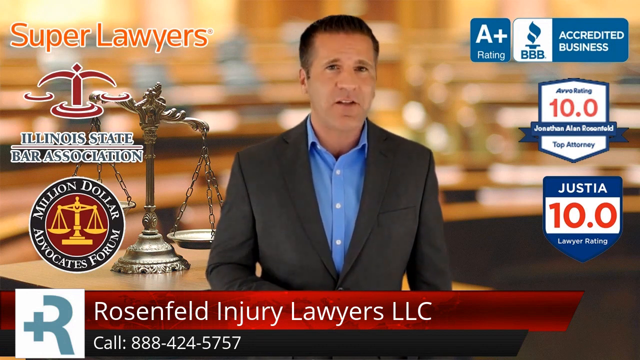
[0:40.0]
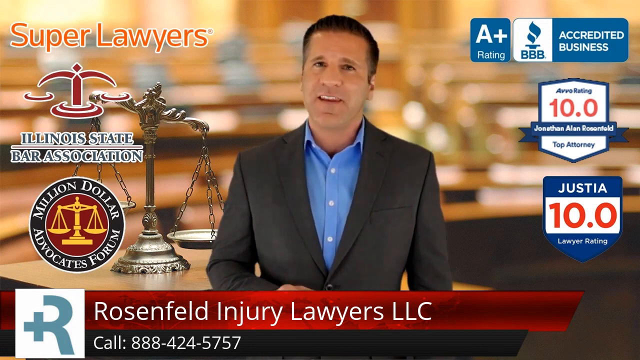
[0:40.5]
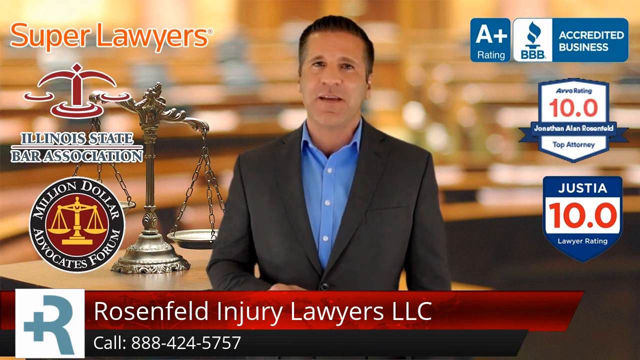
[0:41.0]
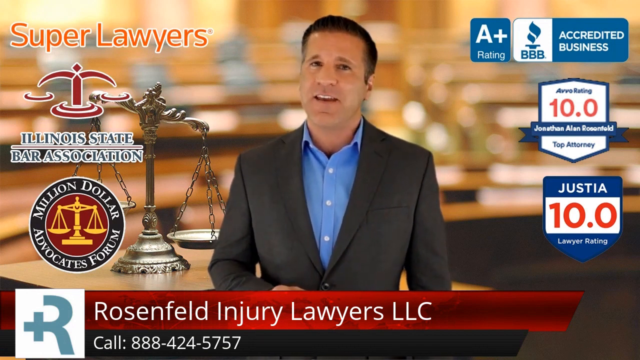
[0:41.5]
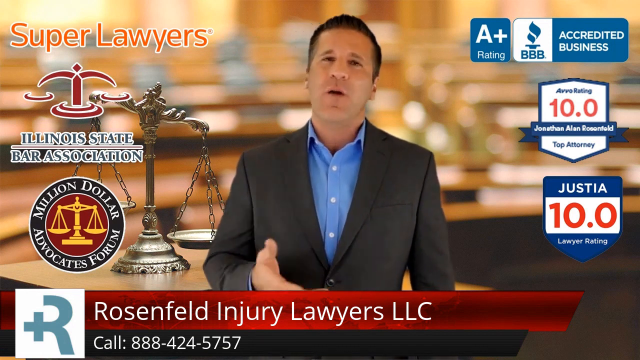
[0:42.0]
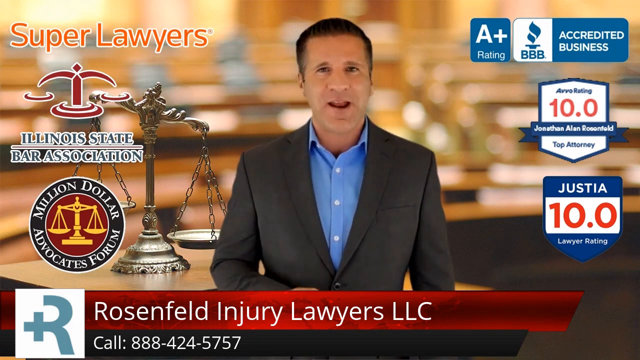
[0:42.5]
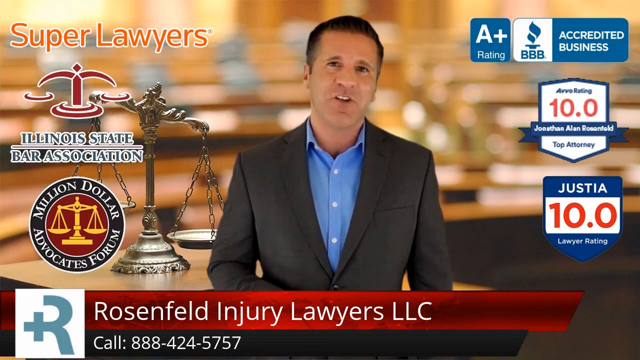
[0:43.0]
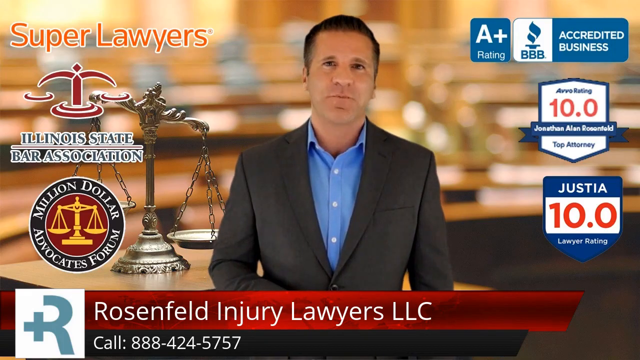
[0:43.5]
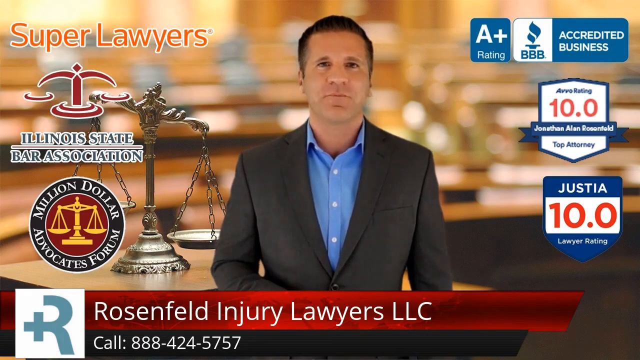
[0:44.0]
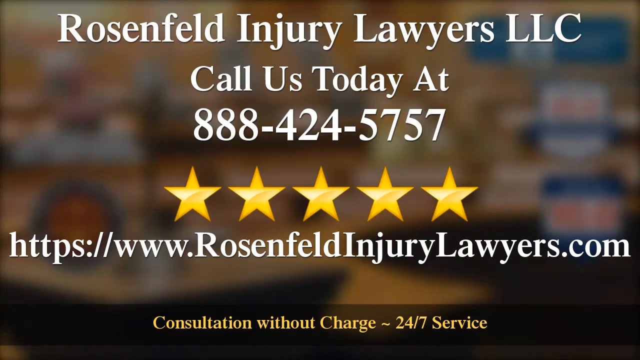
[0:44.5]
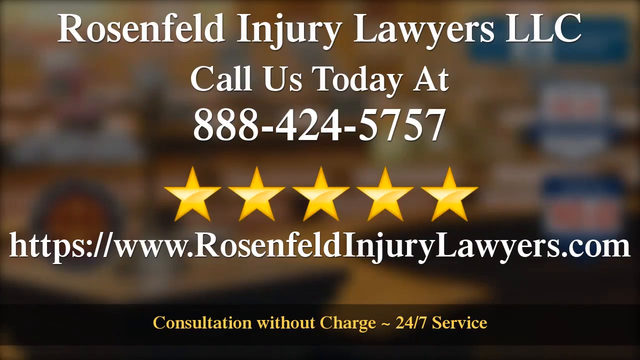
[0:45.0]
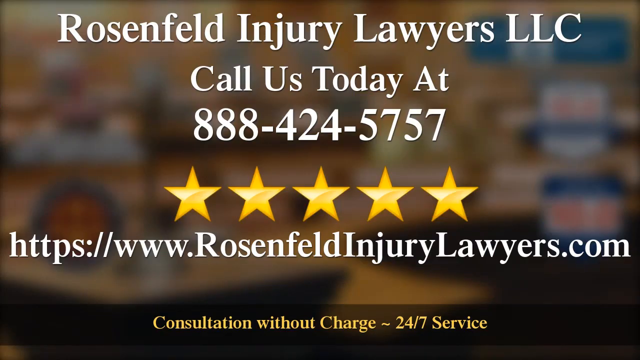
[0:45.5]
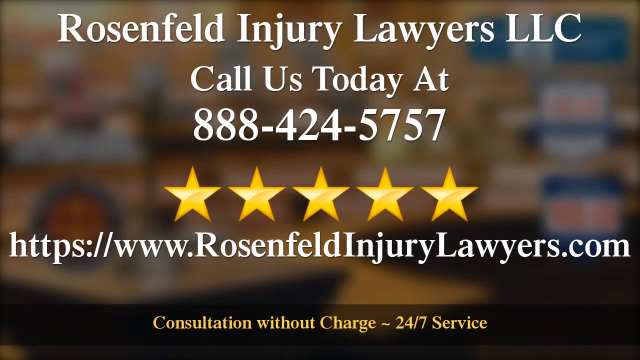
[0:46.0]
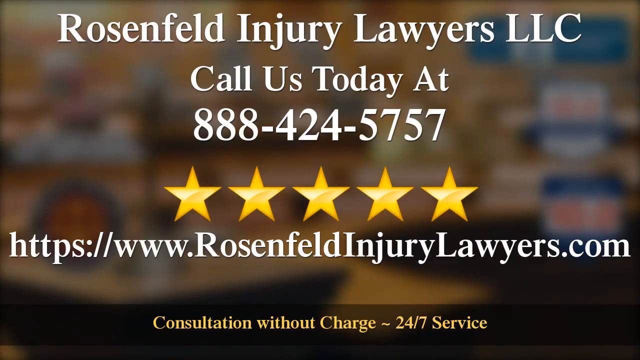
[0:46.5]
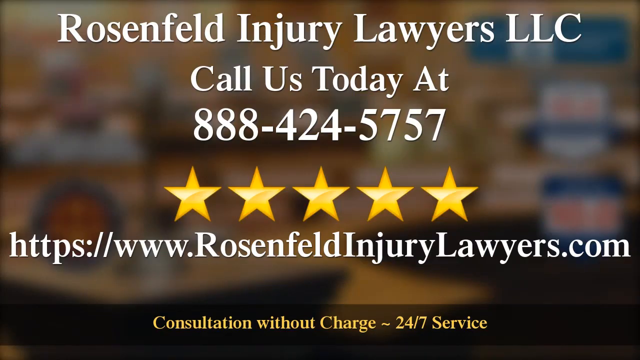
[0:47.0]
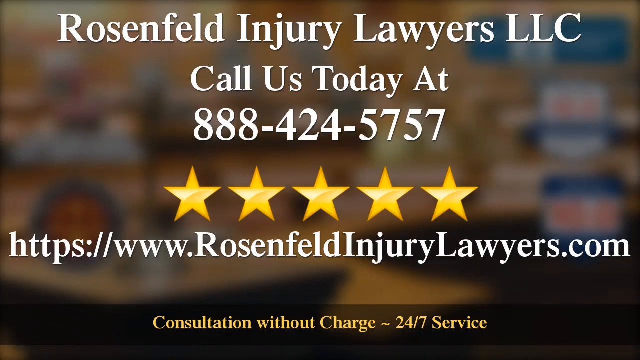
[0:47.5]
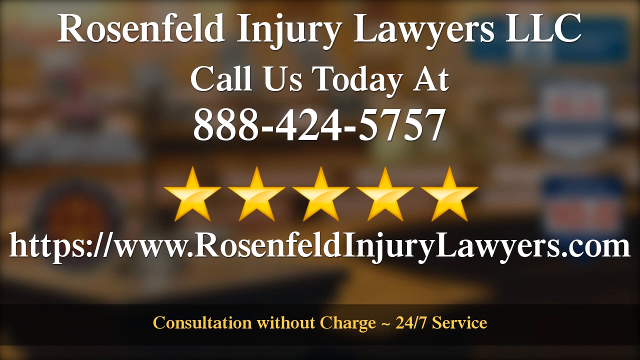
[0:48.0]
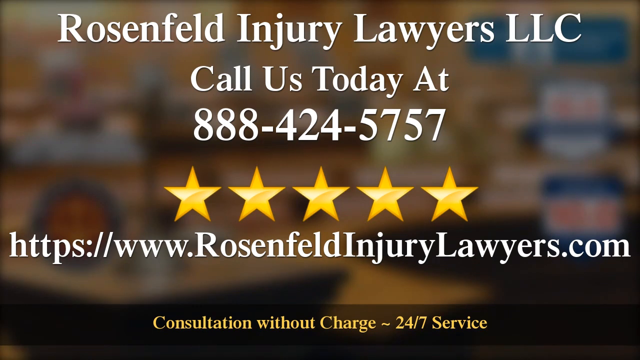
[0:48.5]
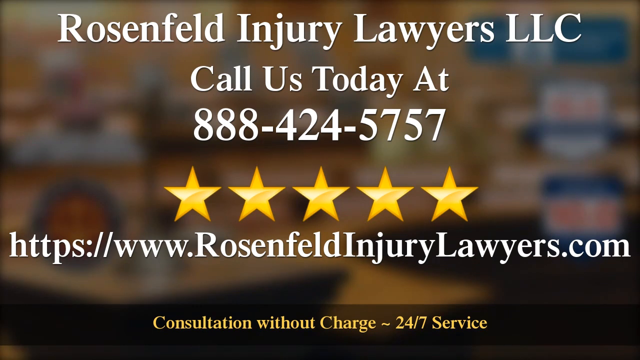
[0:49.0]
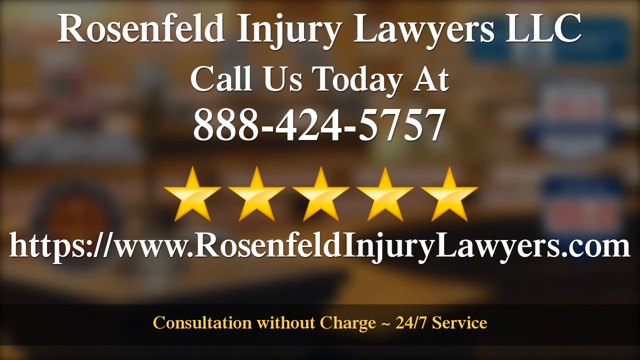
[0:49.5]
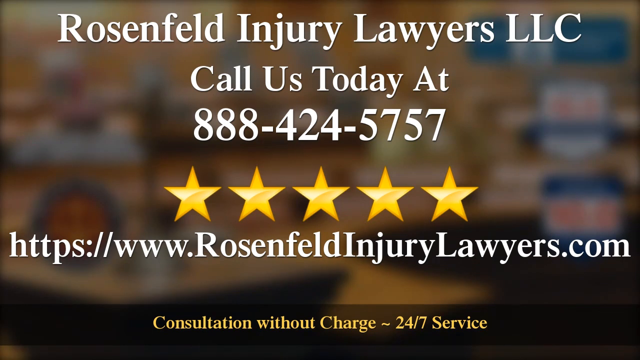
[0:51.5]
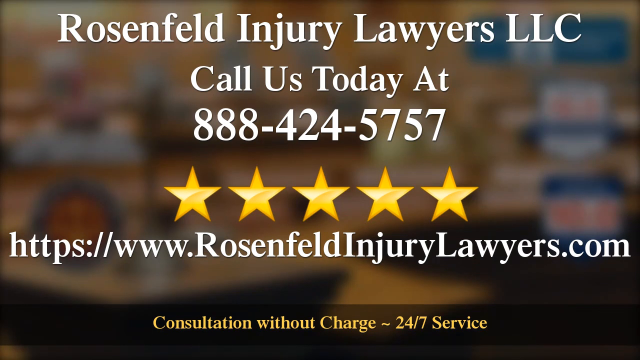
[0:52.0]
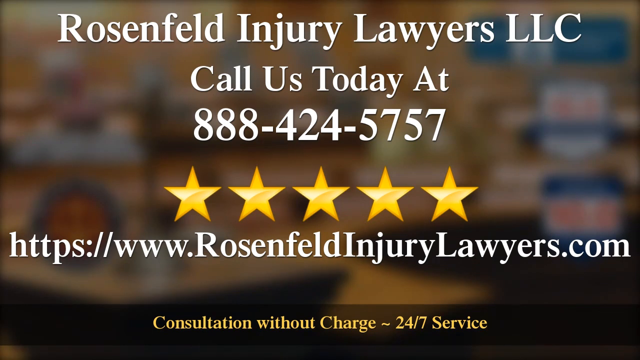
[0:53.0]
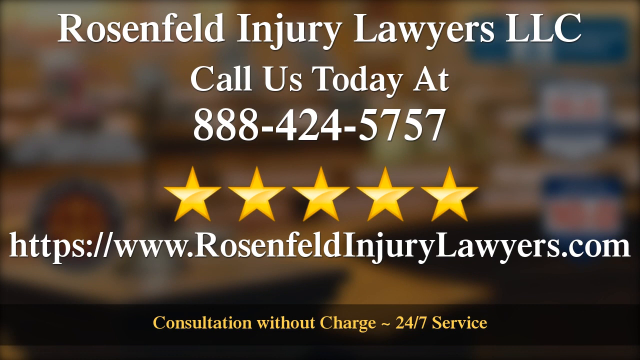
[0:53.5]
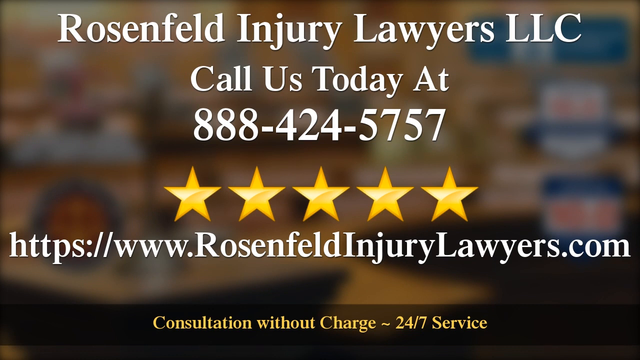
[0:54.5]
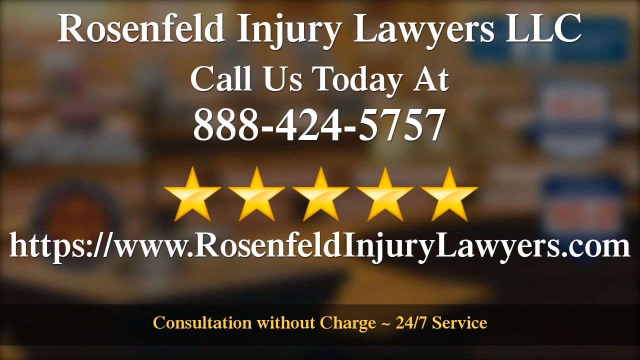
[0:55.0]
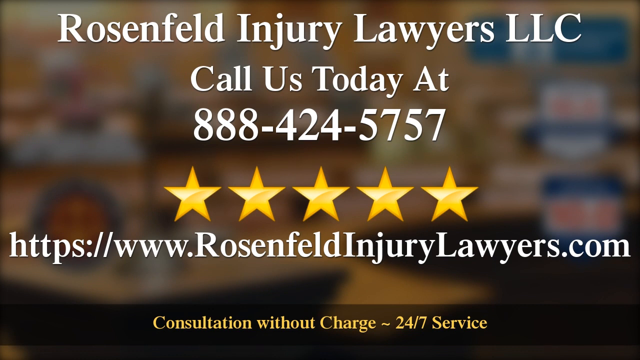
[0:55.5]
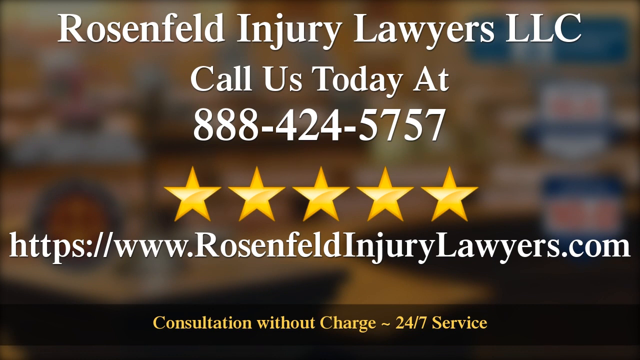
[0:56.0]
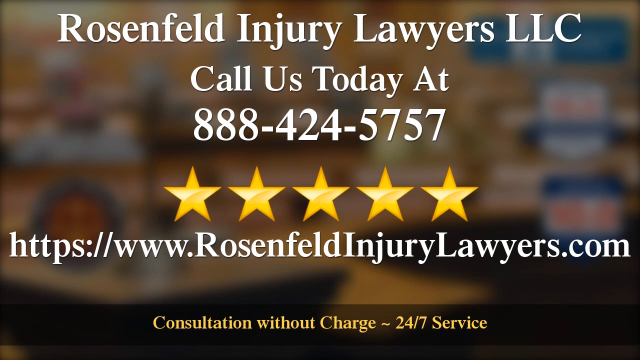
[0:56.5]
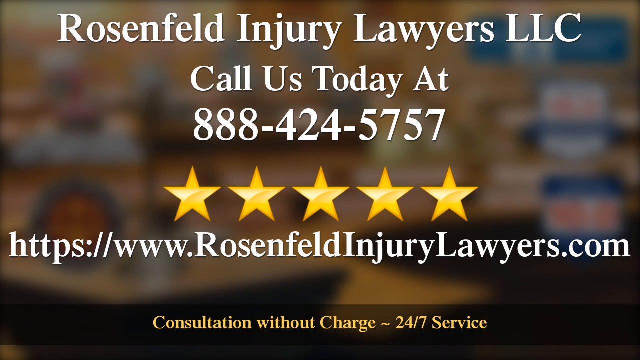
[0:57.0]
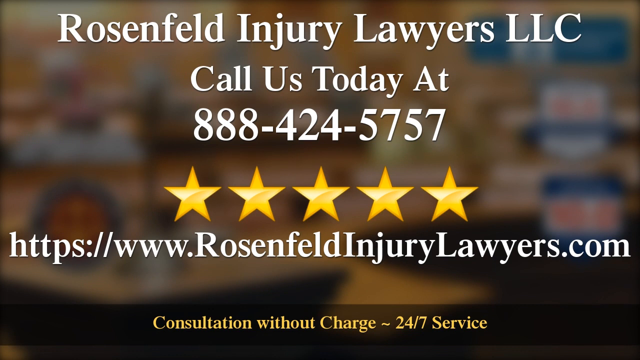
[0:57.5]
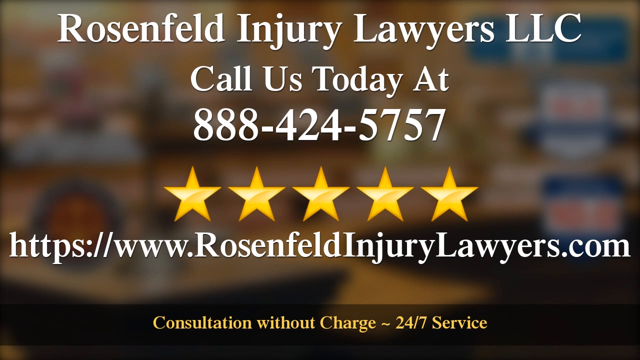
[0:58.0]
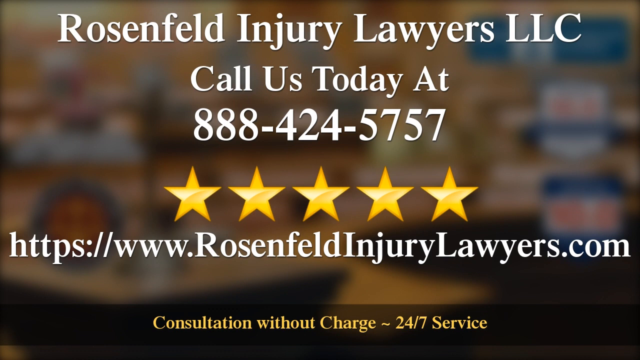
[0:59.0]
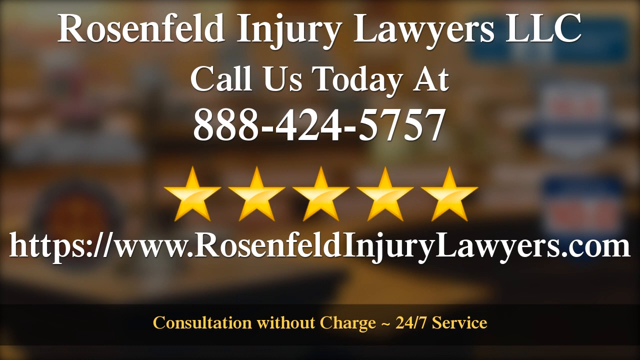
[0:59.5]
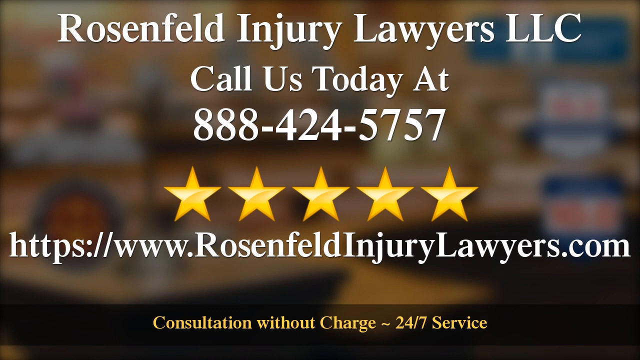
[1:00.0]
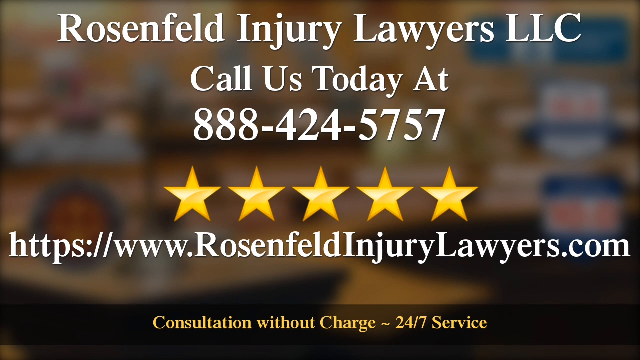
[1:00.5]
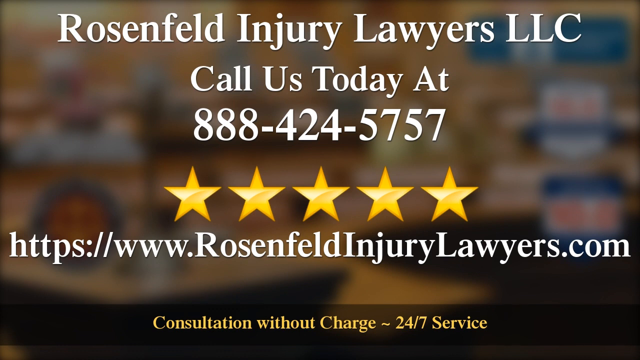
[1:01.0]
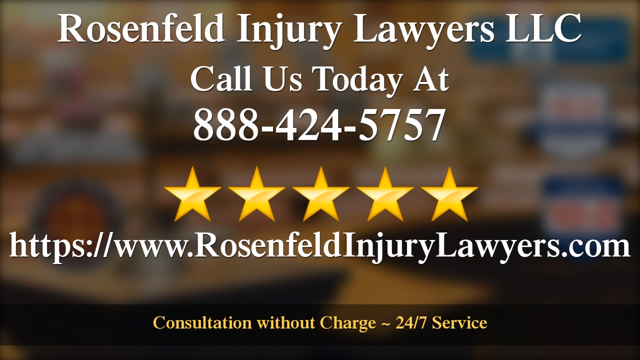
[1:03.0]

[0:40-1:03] On-screen text reads "Contact us today at 888-424-5757-5STAR", "https://www.rosenfieldinjurylawyers.com", "Consultation without charge" and "24x7 Service".